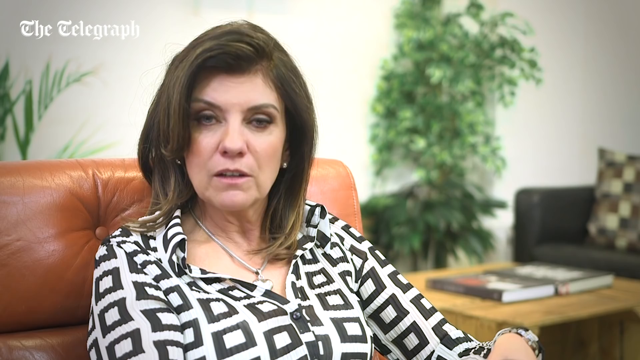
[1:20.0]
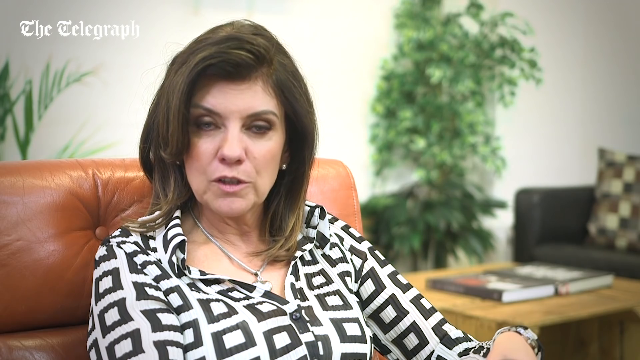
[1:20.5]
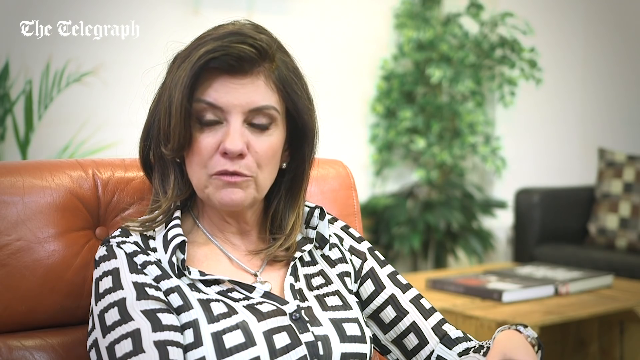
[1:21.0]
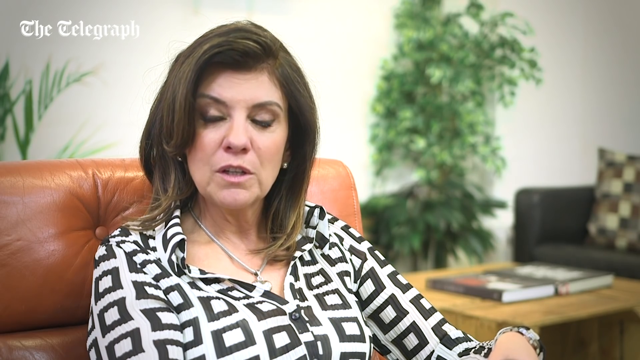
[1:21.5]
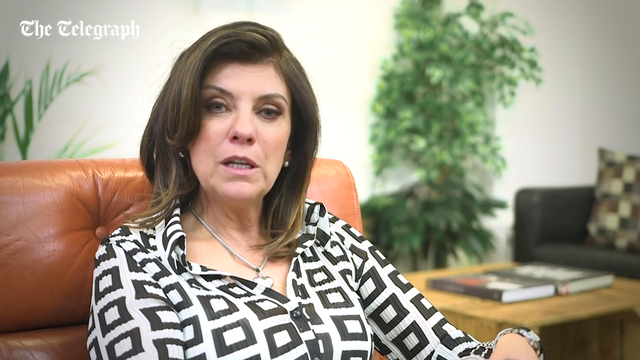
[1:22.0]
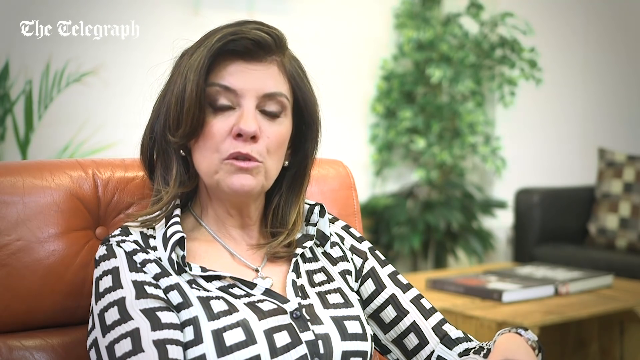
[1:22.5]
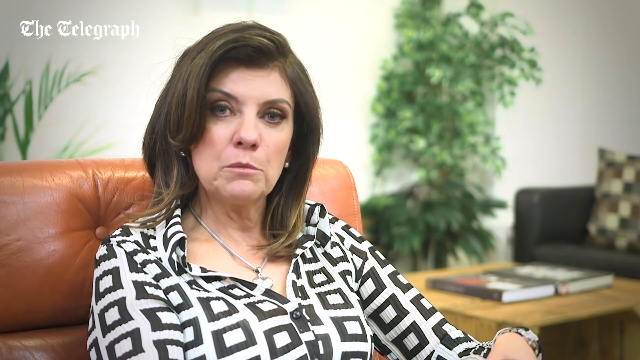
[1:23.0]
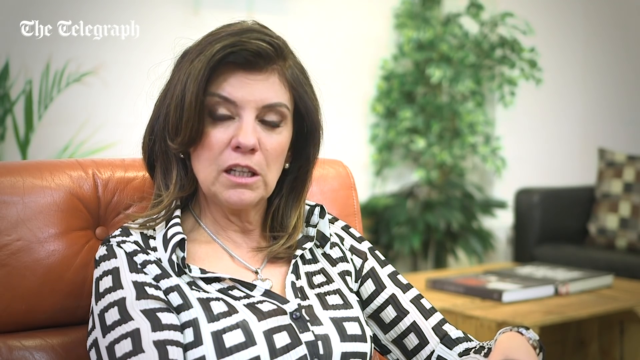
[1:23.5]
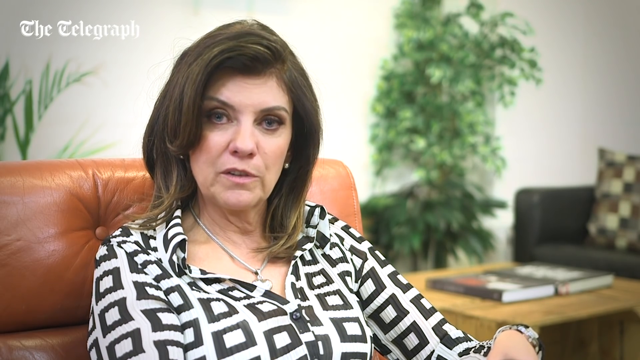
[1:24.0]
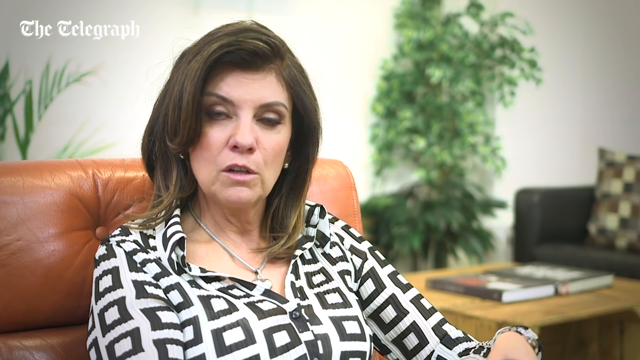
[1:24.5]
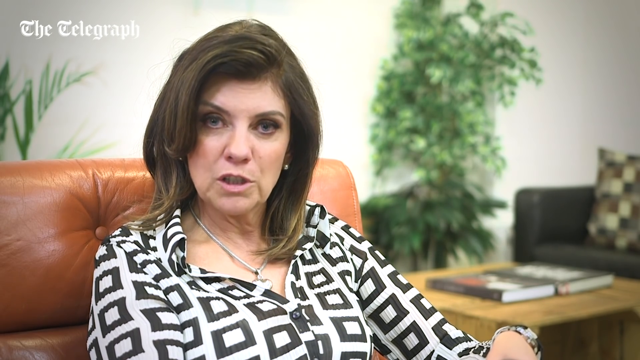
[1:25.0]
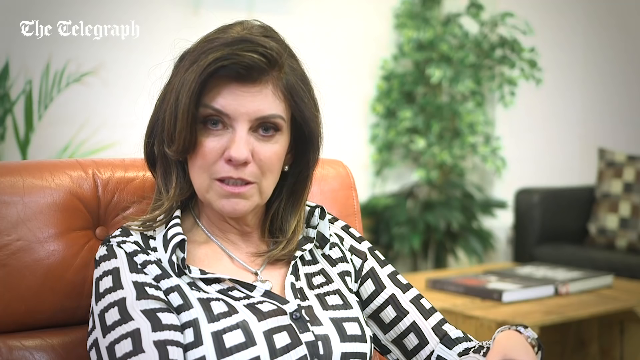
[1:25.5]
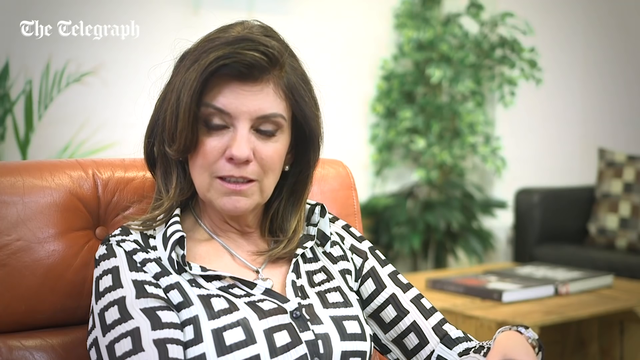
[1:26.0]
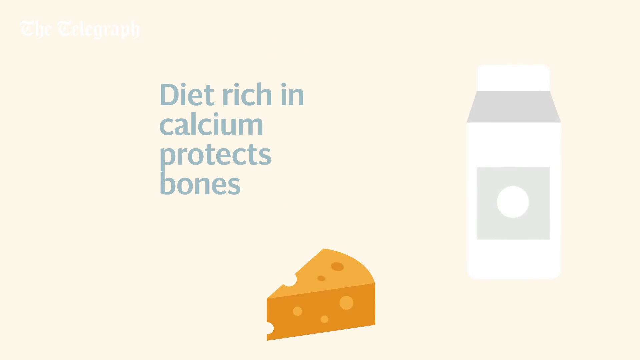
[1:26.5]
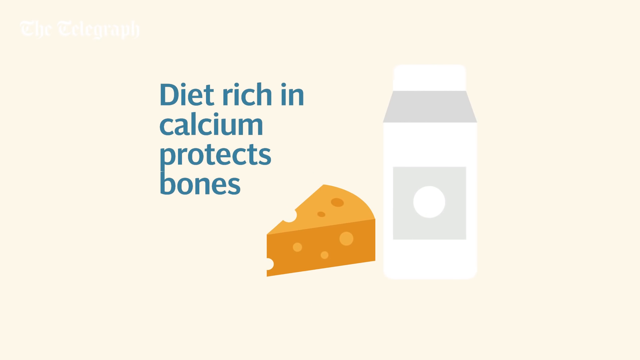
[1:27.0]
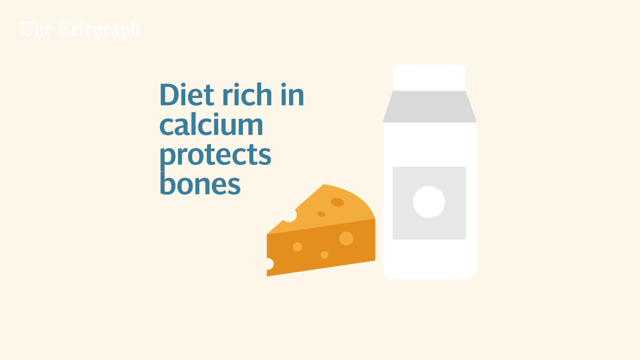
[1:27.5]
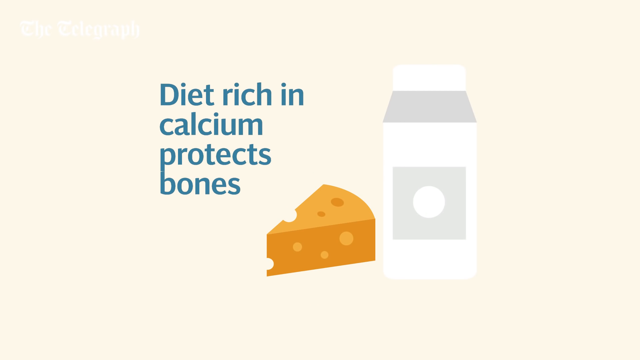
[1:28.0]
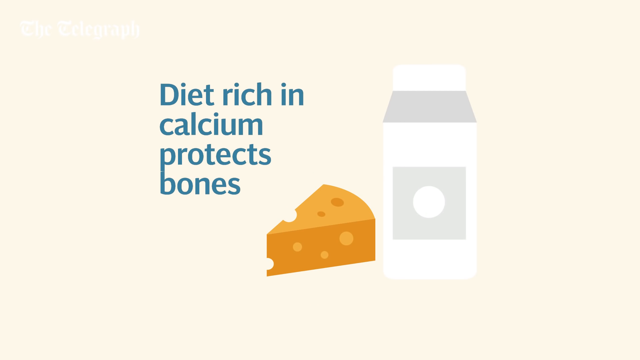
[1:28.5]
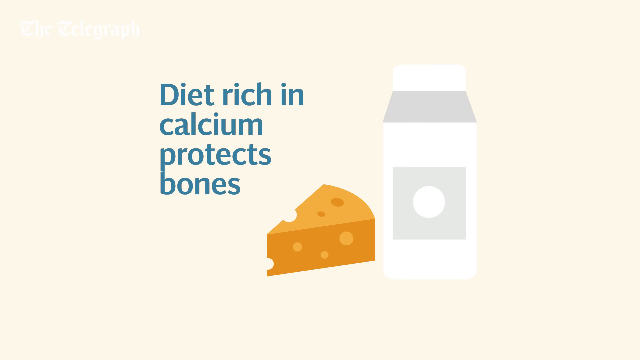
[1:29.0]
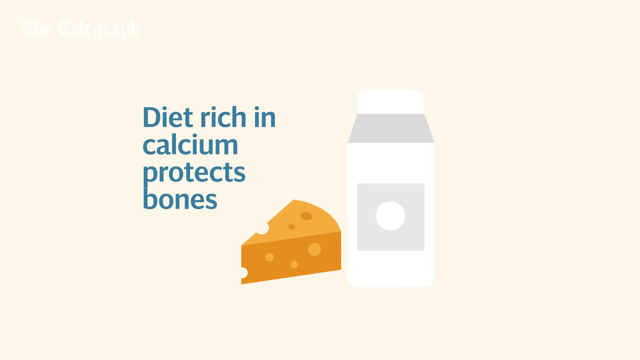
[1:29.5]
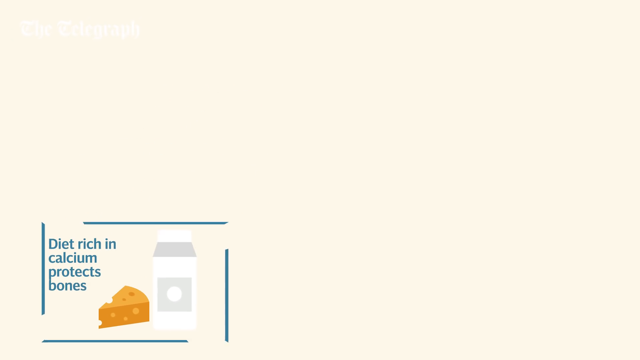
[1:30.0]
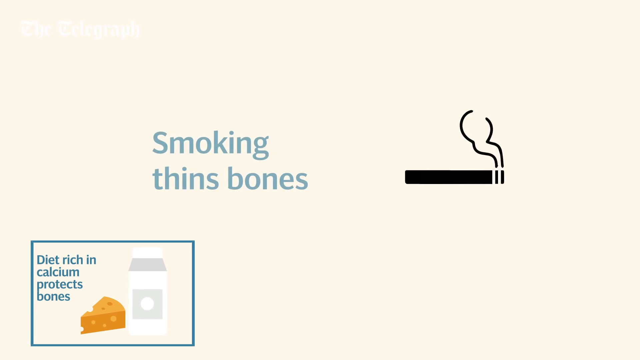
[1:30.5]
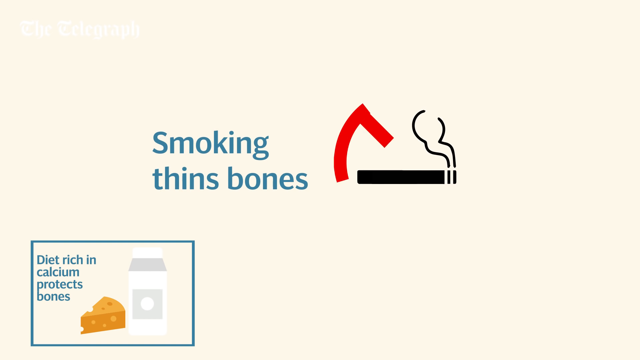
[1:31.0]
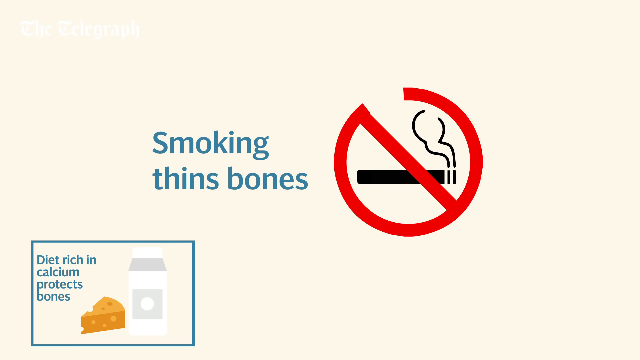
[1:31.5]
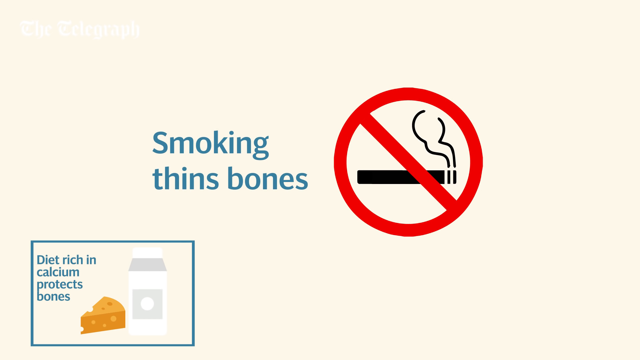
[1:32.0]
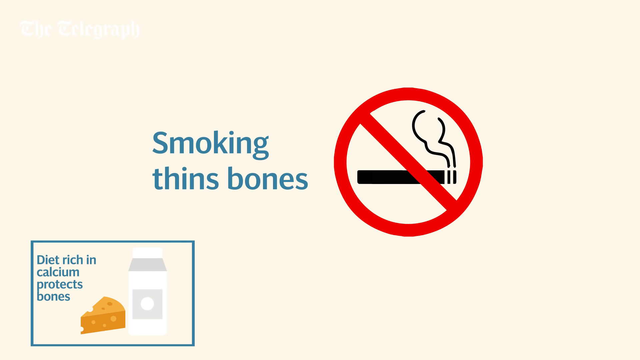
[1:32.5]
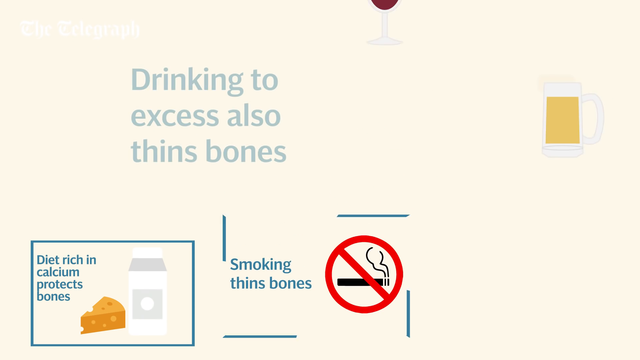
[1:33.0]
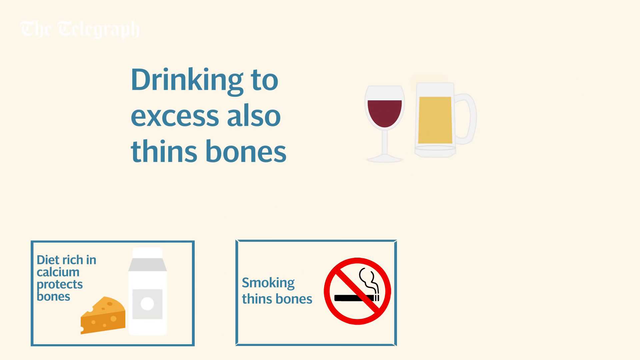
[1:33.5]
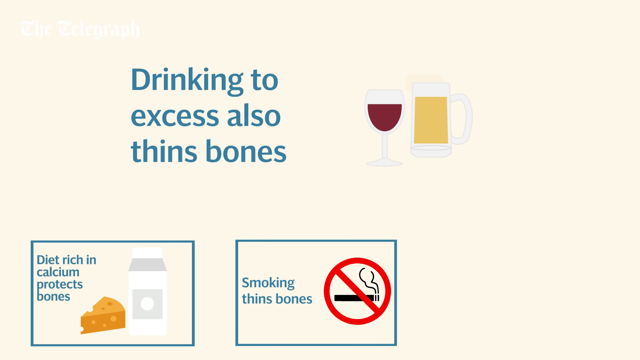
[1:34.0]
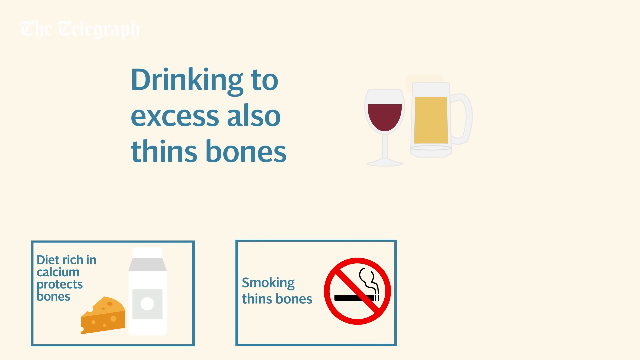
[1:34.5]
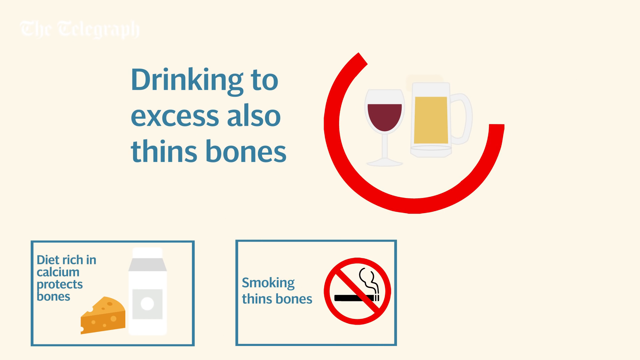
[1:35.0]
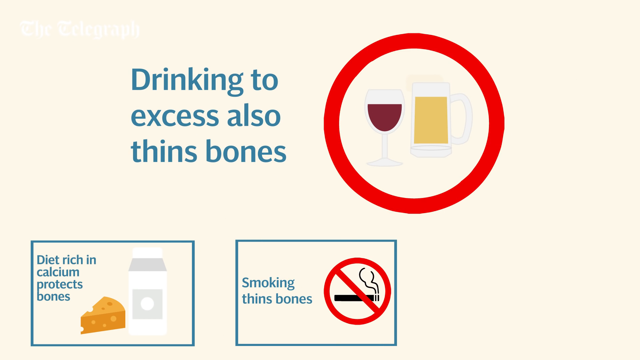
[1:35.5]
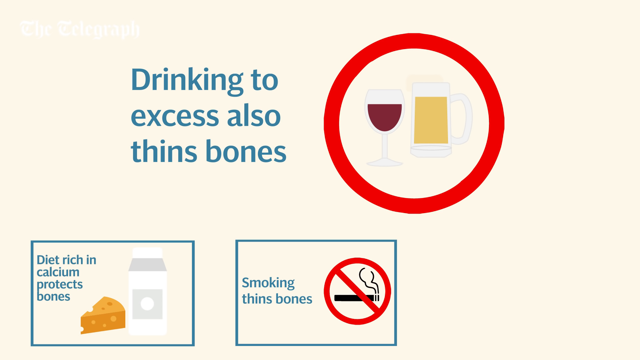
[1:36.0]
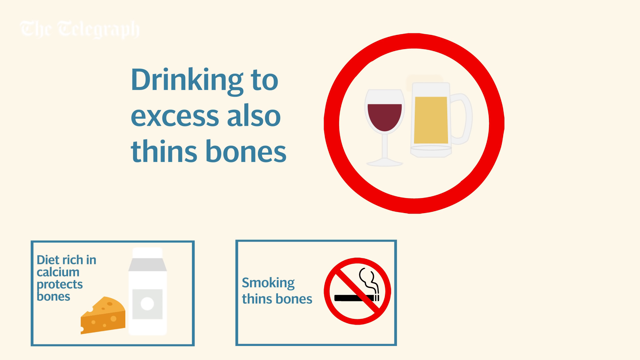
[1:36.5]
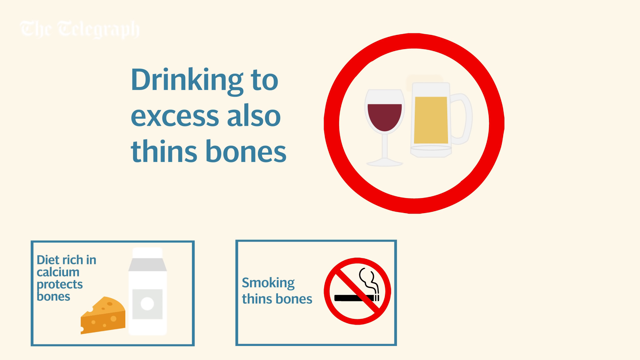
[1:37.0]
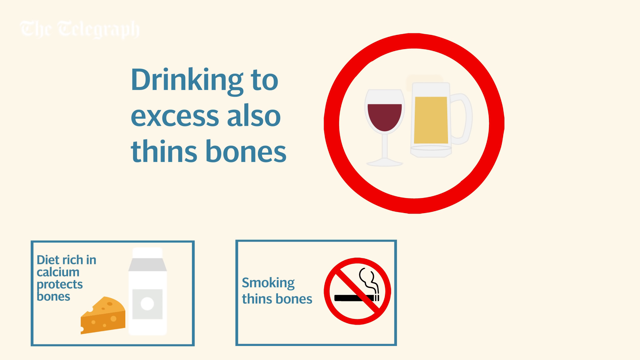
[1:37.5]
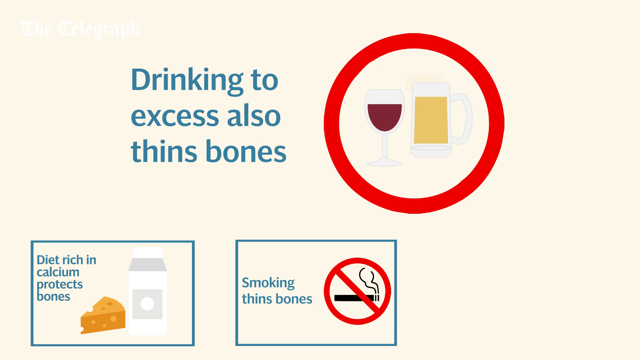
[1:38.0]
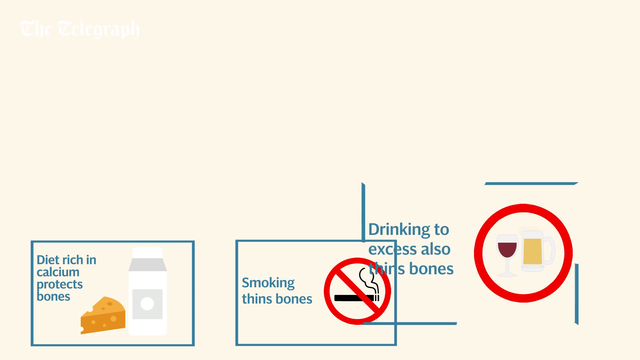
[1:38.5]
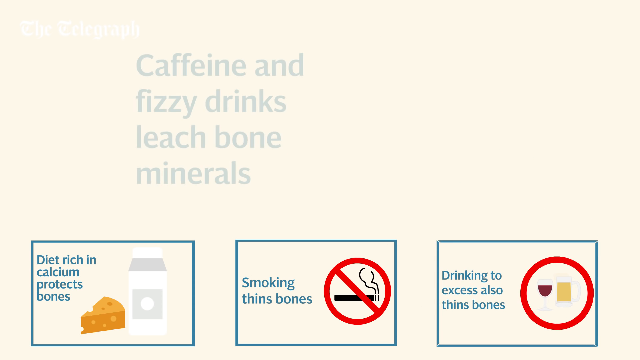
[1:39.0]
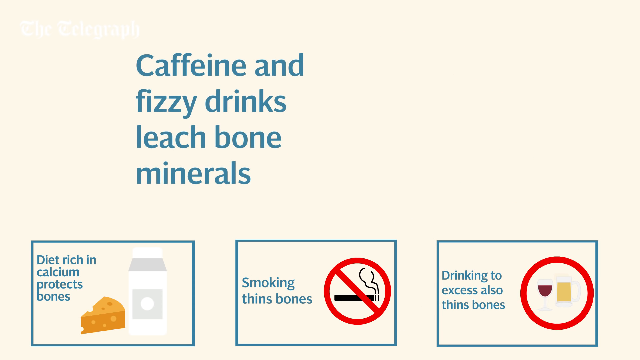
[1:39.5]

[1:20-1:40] The doctor talks into the camera, the background unchanged with the greenery in the corner and behind her. The cream background then returns, and illustrations of a block of cheese and a carton of milk come in from the bottom and the right-hand side of the screen, with blue text next to them reading "diet rich in calcium protects bones". This moves to the bottom left of the screen with a dark blue box around it. In the middle of the screen is a black cigarette with black outlines of smoke coming out of it, with blue text next to it reading "smoking thins bones"; a red circle with a cross through it goes over the cigarette. That moves to the bottom middle of the screen alongside the calcium box. New text appears at the top reading "drinking to excess also thins bones", with a small picture of a wine glass with red wine in it and a beer glass with beer in it; a red circle goes across the alcohol, and that also moves to the bottom right.